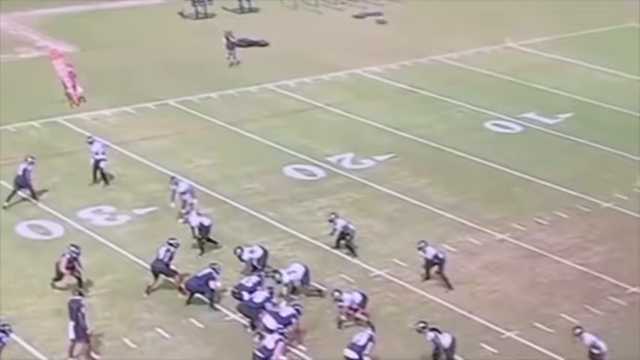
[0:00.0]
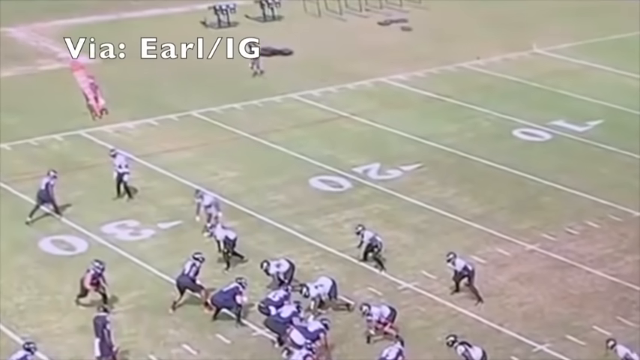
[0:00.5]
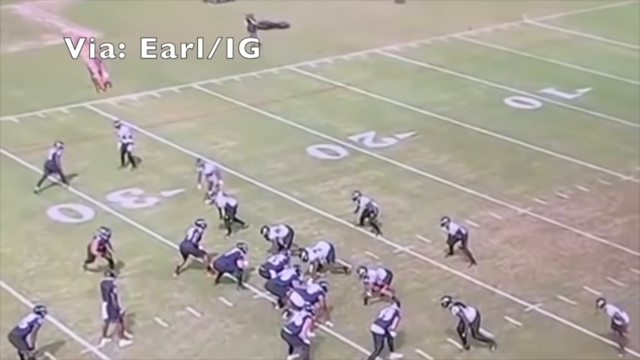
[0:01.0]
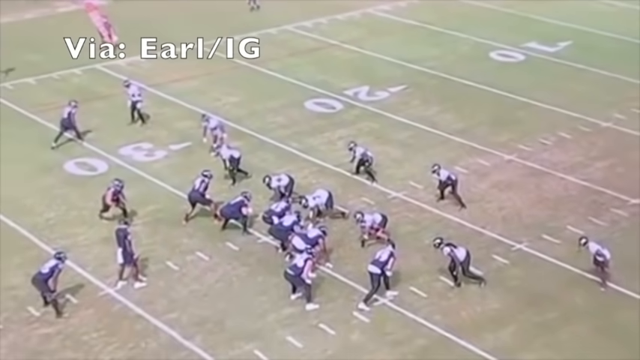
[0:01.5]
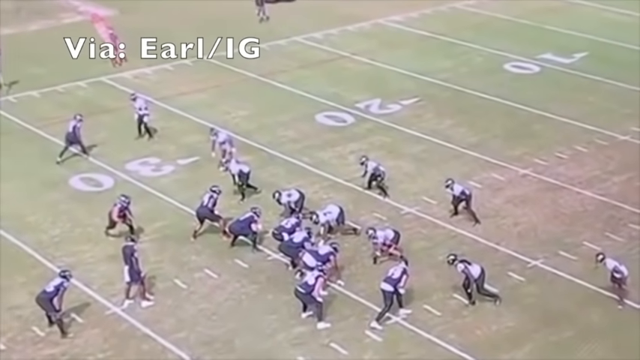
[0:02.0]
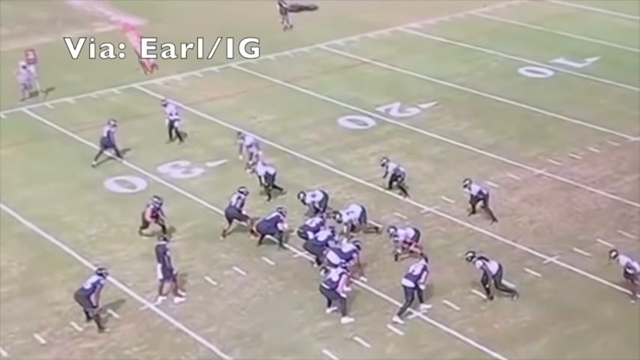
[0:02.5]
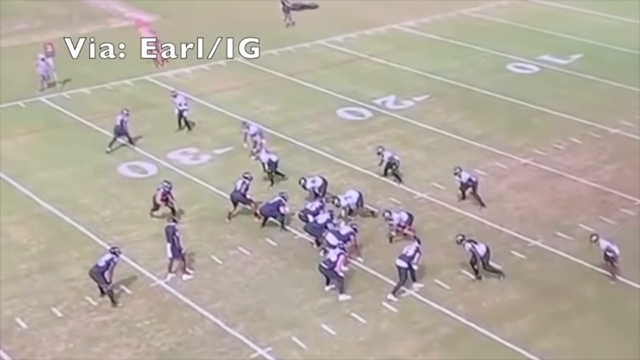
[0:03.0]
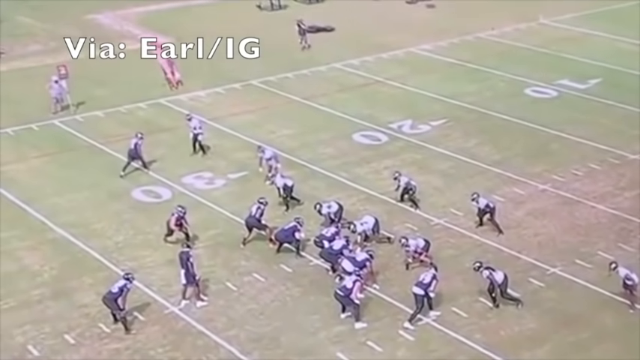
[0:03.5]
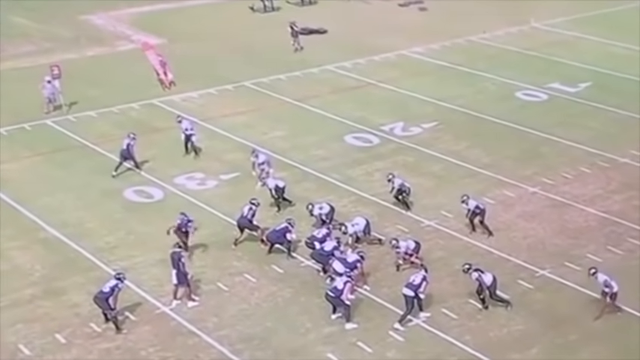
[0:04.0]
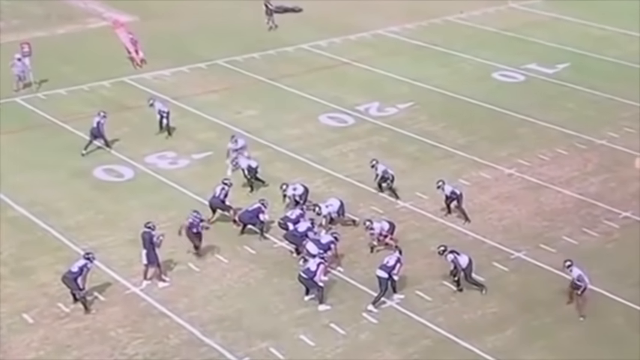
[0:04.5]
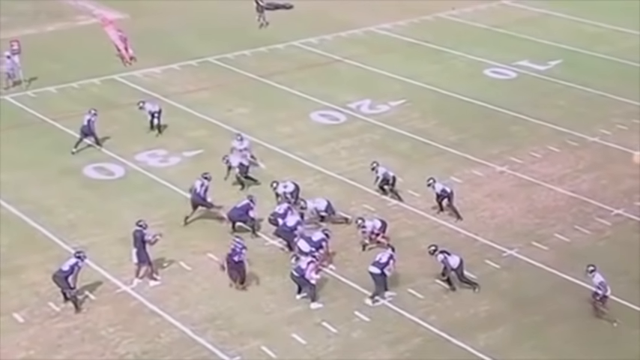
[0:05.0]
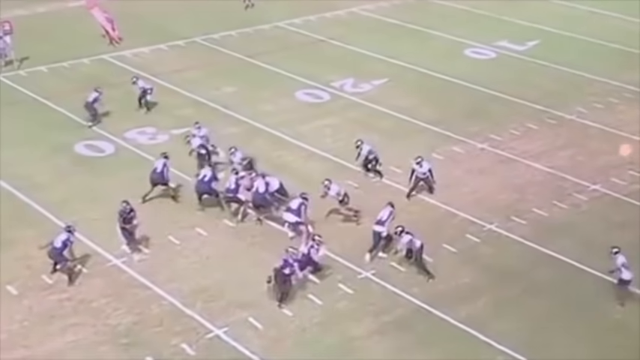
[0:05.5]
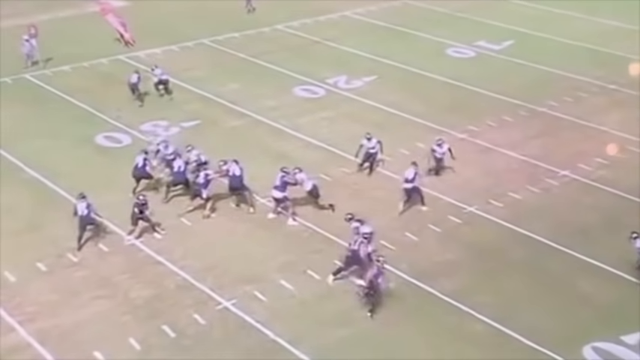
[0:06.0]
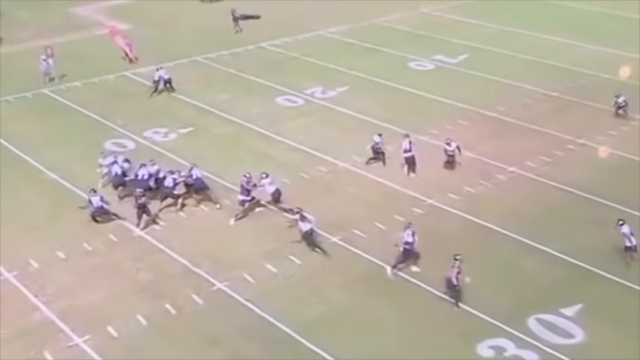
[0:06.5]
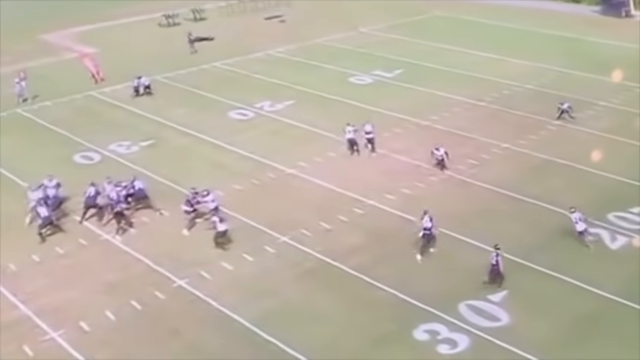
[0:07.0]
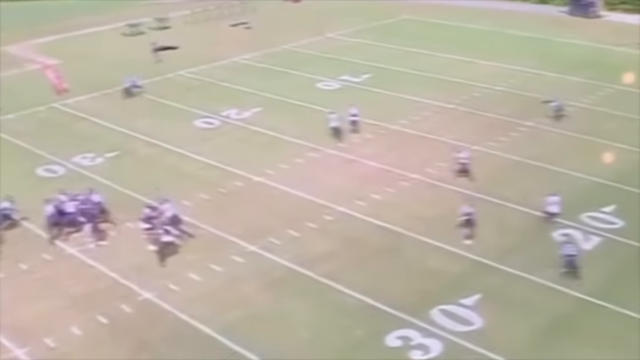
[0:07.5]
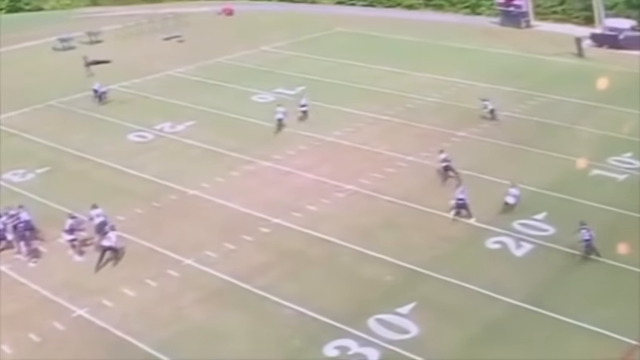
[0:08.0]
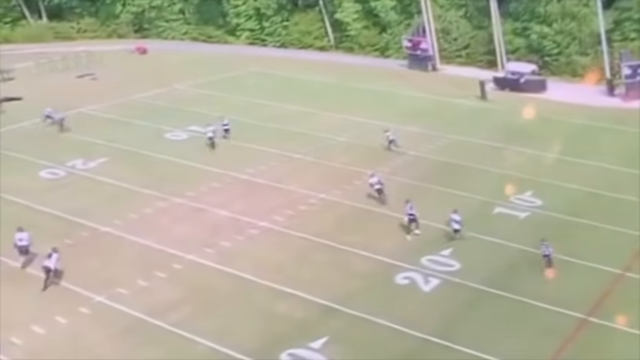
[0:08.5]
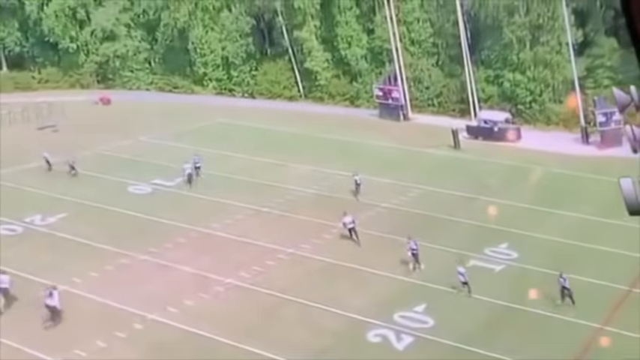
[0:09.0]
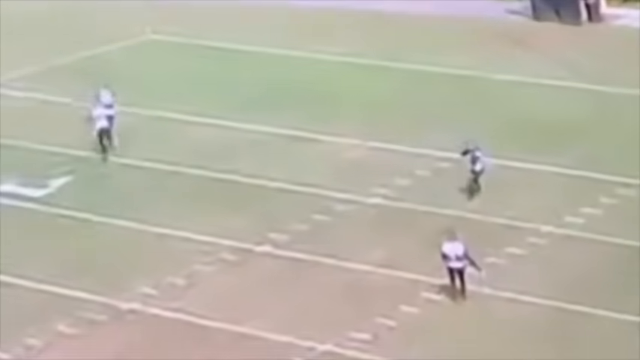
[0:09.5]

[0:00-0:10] The video, a little wider than it is tall, is an aerial recording of a football game. The camera shakes the entire time, possibly because it is a drone or an amateur photographer, and the image is quite blurry. Two teams are lined up somewhere around the 28 or 29 yard line. The team on the near side wears blue from jersey to pants, while the other side has white jerseys with dark pants. A player on the blue team runs from the far end toward the camera. The ball is hiked to the quarterback, who throws it to the left side of the field; the image blurs, so it is unclear whether the receiver catches it. The ball goes into the end zone on the left side of the field as the camera shakes, and one player from the other team runs after the receiver but does not tackle him at the very end. It looks like it may be a touchdown, but this can't be confirmed. The field is generally green except for the very center, which looks worn out, the grass brown like dirt.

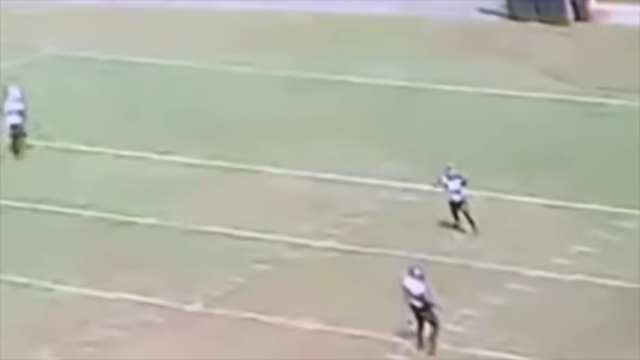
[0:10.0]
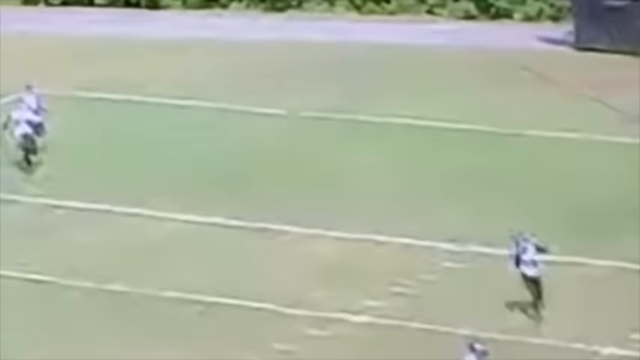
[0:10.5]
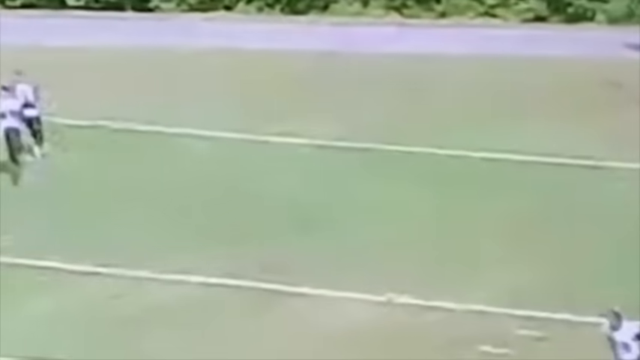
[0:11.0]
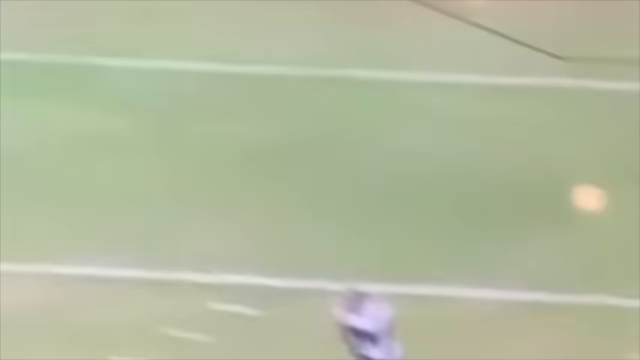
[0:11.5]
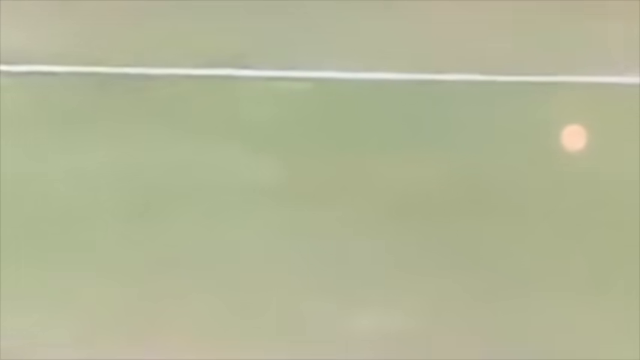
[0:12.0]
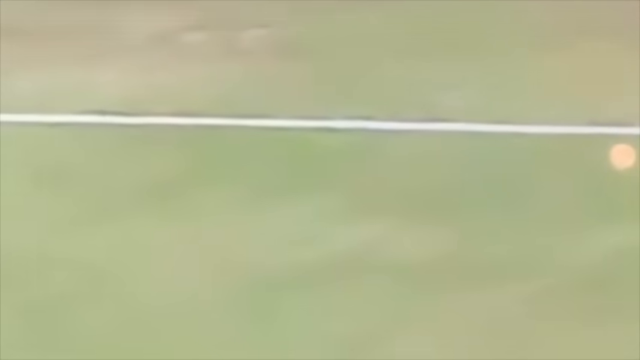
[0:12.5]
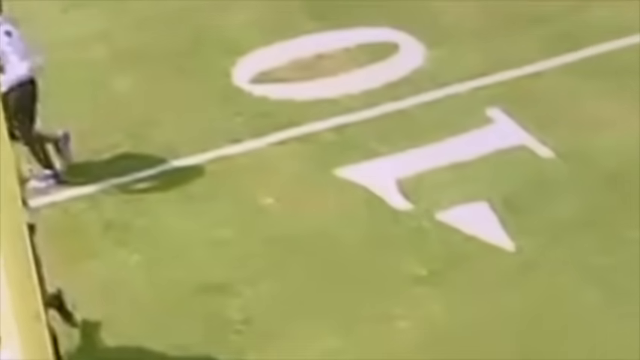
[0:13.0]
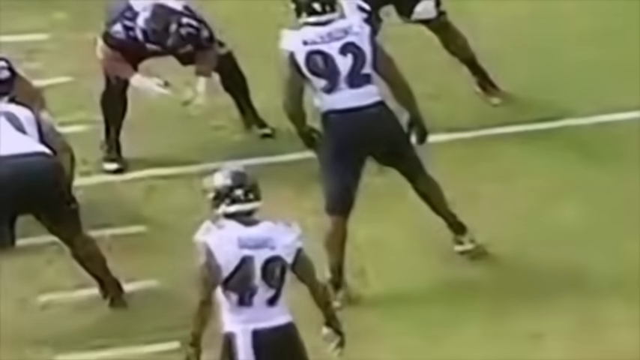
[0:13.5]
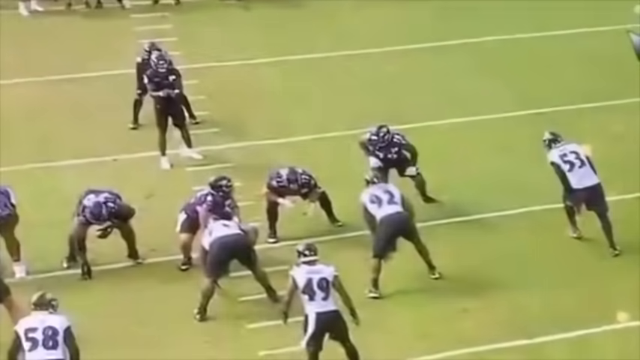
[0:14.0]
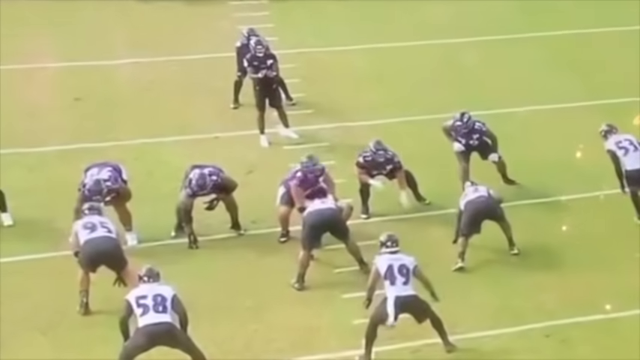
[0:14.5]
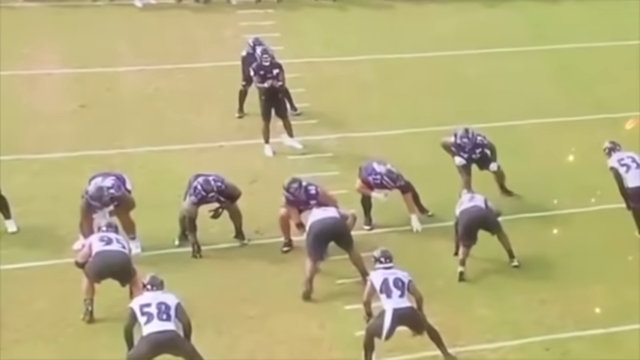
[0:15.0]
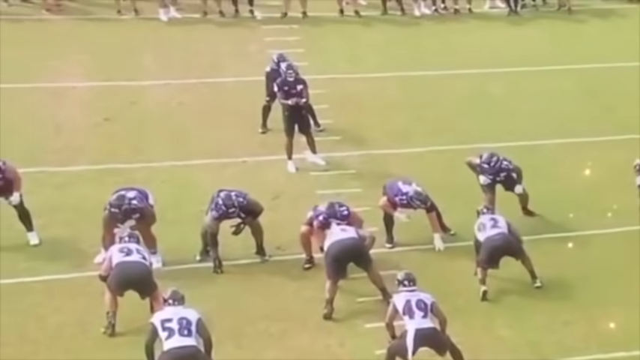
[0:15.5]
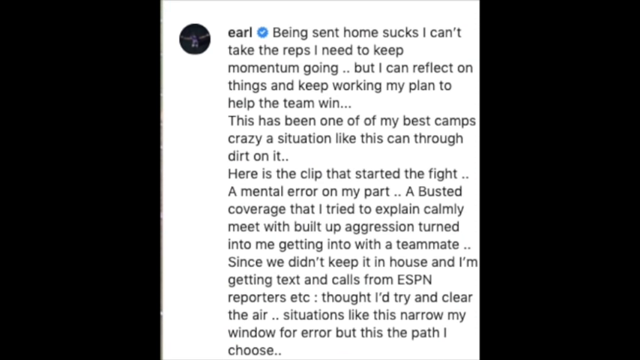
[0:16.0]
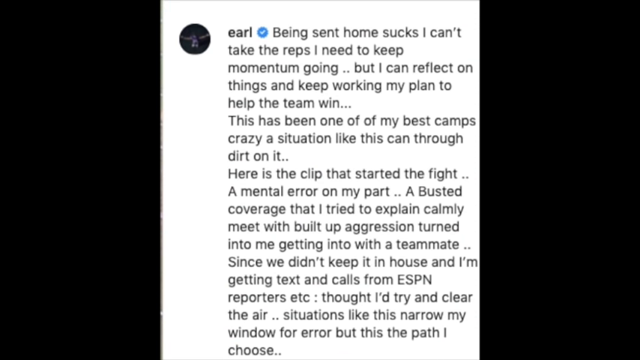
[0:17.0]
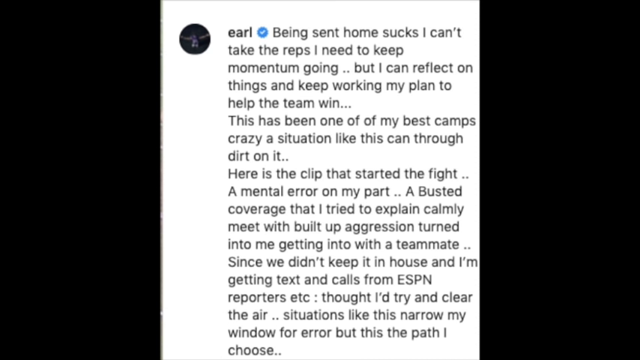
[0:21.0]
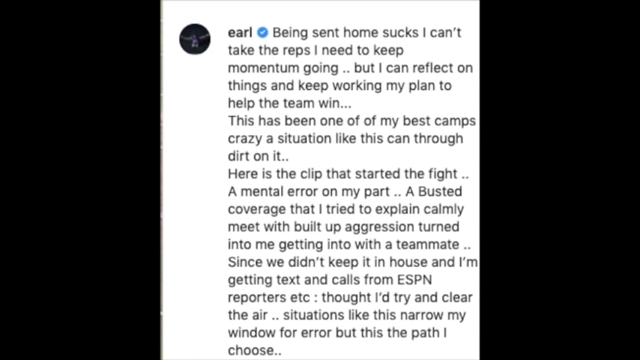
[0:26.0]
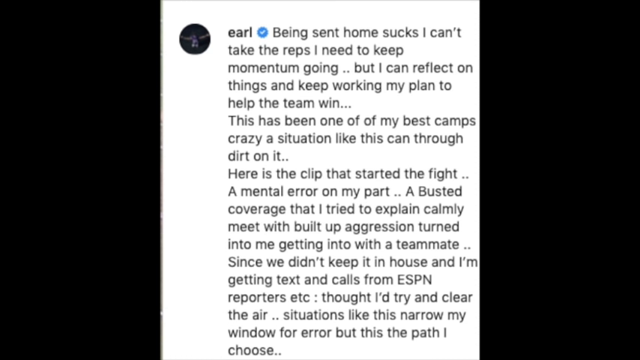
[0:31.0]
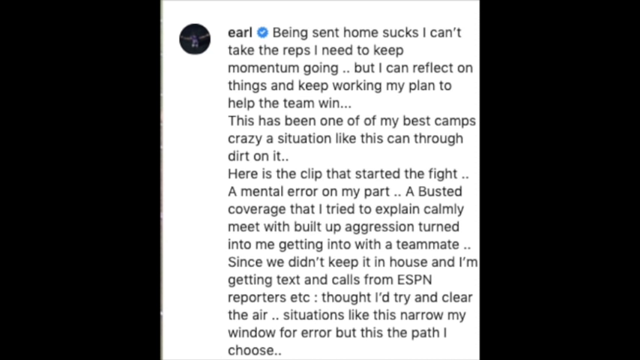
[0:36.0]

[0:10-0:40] The shot shows the end zone of a field, pretty blurry, with the camera shaky the whole time, so not everything can be made out. On the left-hand side, a player in a darker blue jersey and dark pants is chased by a player in dark pants and a lighter-colored shirt, likely trying to tackle him. The scene cuts to a new view from behind the team in the lighter-colored jerseys, looking toward the team in the darker-colored jerseys. That cuts to a Twitter post from Earl that reads: "Being sent home sucks. I can't take the reps I need to keep momentum going but I can reflect on things and keep working my plan to help the team win. This has been one of my best camps. Crazy a situation like this can throw dirt on it. Here is the clip that started the fight. A mental error on my part. A busted coverage that I tried to explain calmly meets with build up aggression turned into me getting into with a teammate. Since we didn't keep it in house I'm getting texts and calls from ESPN."